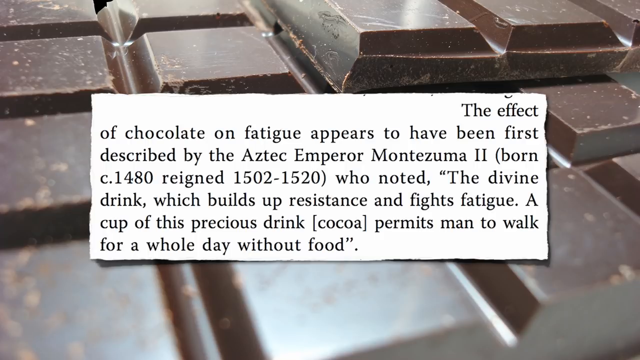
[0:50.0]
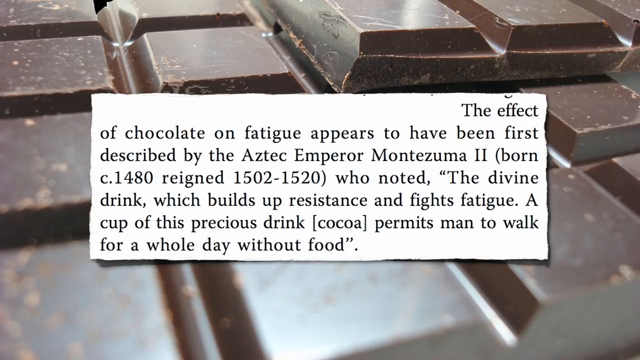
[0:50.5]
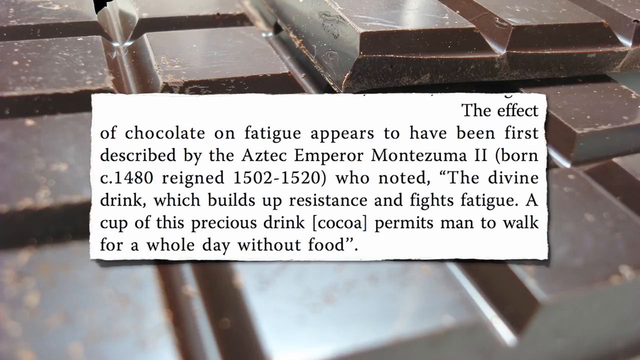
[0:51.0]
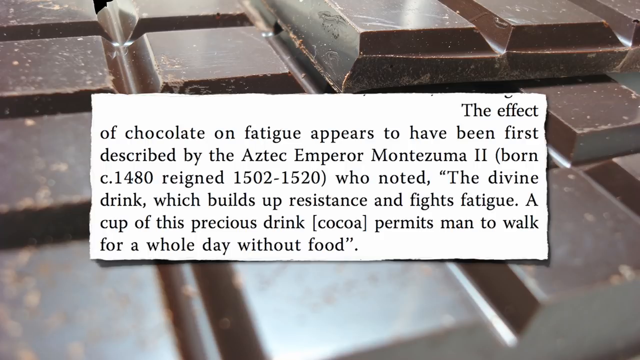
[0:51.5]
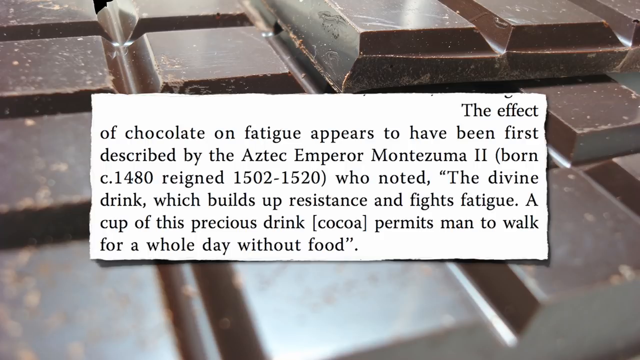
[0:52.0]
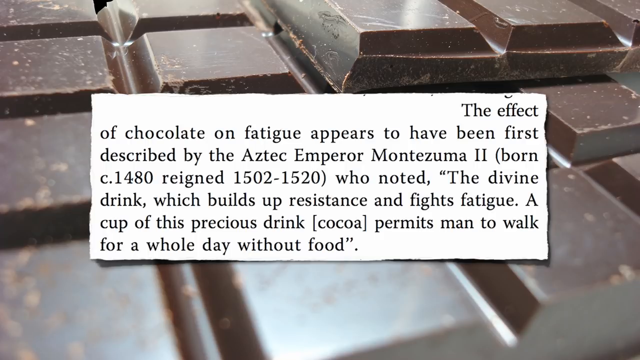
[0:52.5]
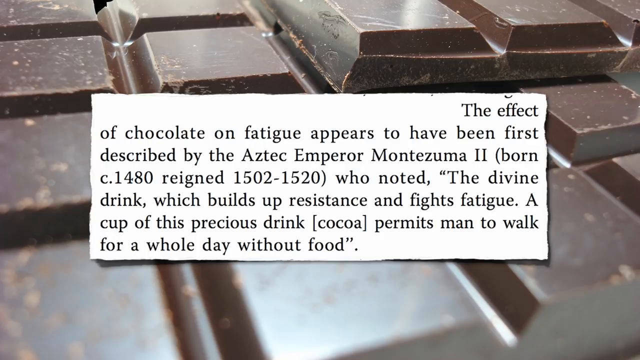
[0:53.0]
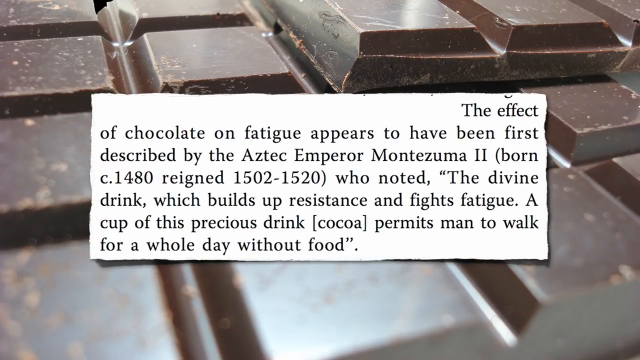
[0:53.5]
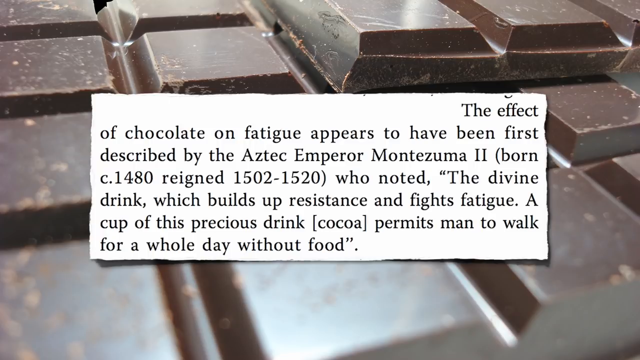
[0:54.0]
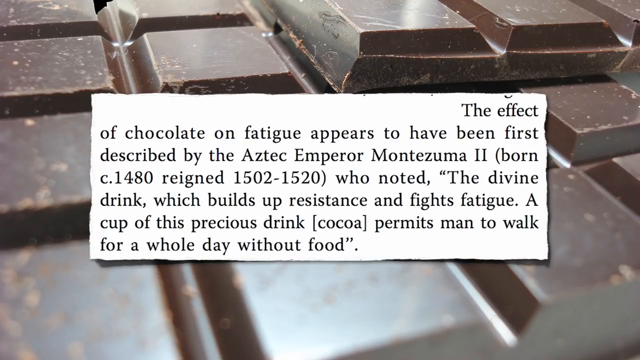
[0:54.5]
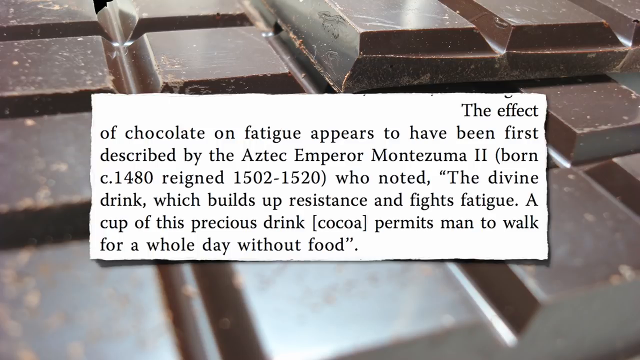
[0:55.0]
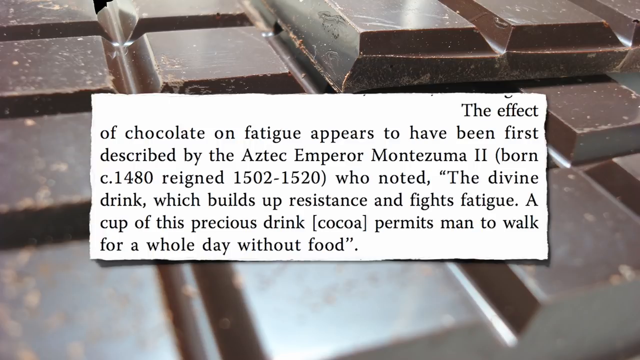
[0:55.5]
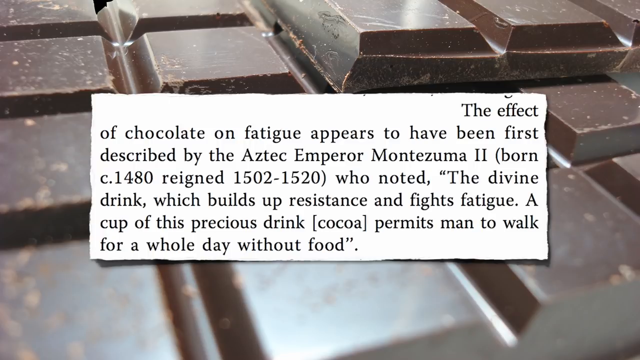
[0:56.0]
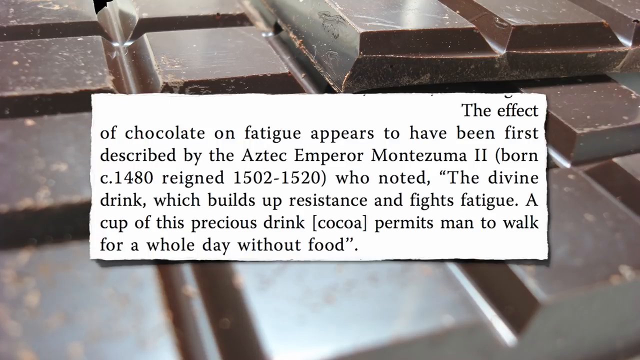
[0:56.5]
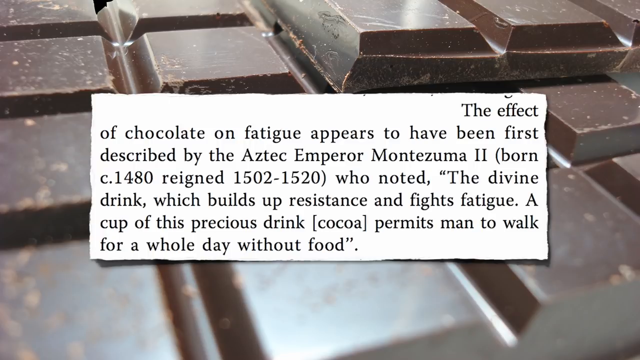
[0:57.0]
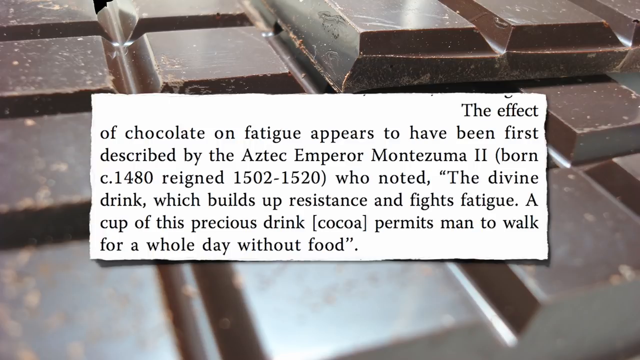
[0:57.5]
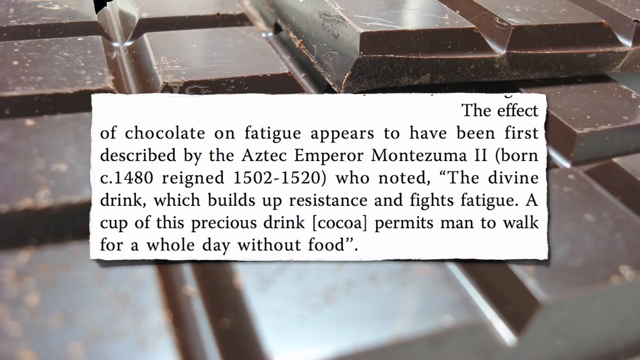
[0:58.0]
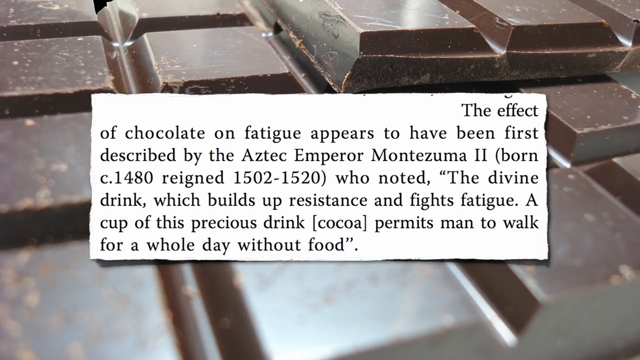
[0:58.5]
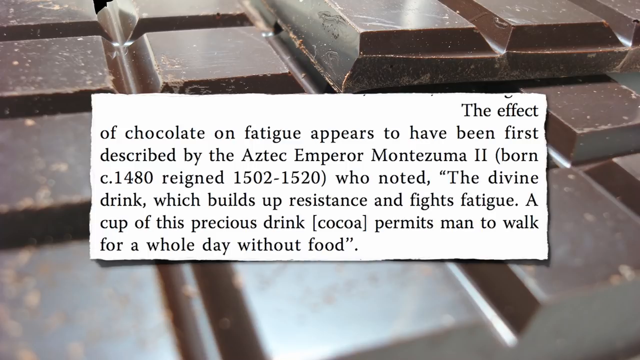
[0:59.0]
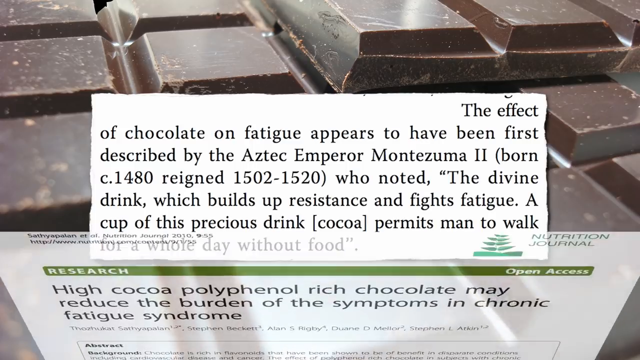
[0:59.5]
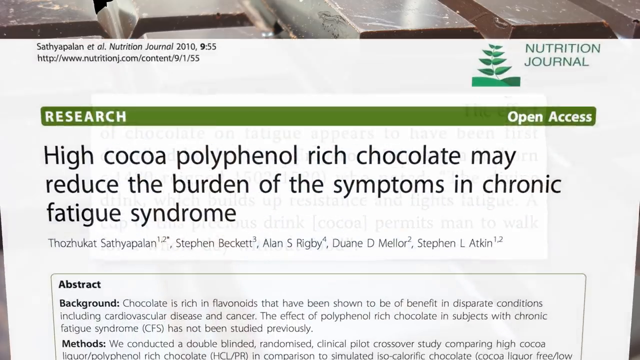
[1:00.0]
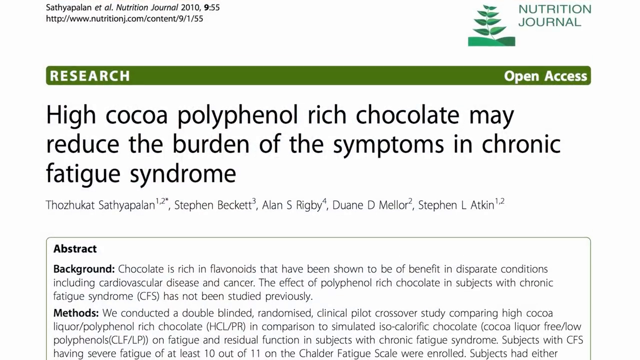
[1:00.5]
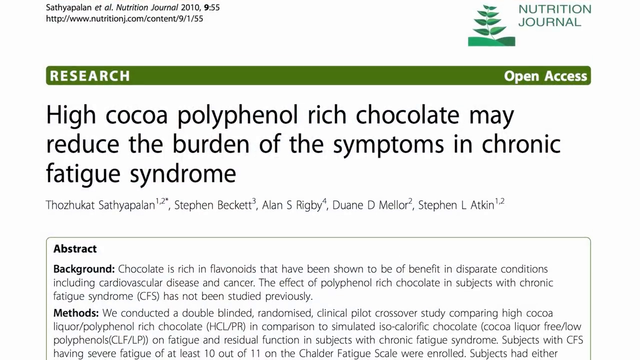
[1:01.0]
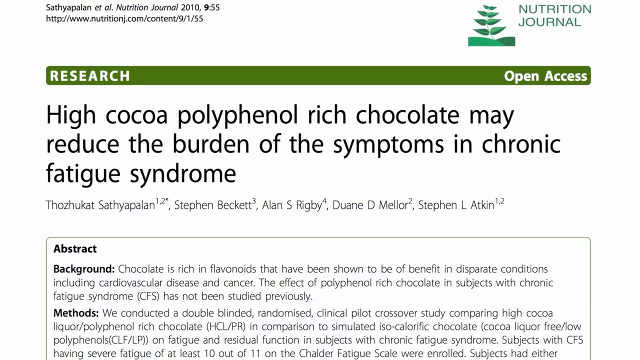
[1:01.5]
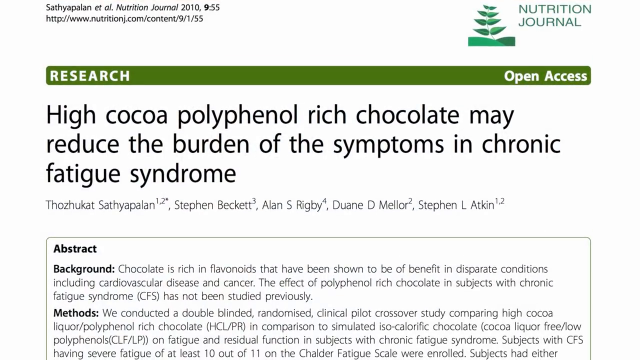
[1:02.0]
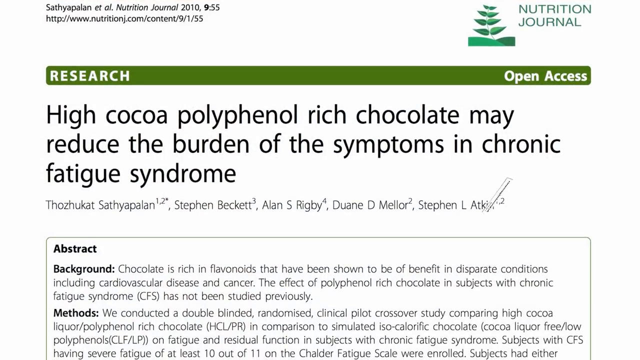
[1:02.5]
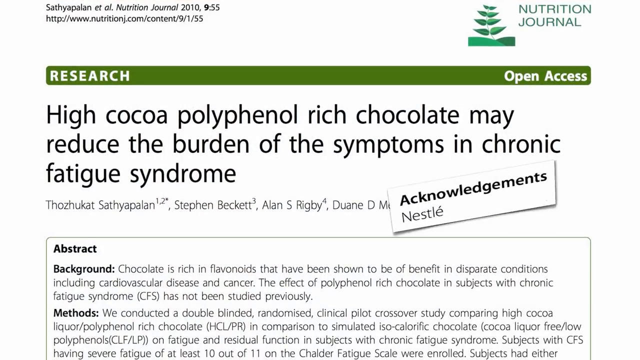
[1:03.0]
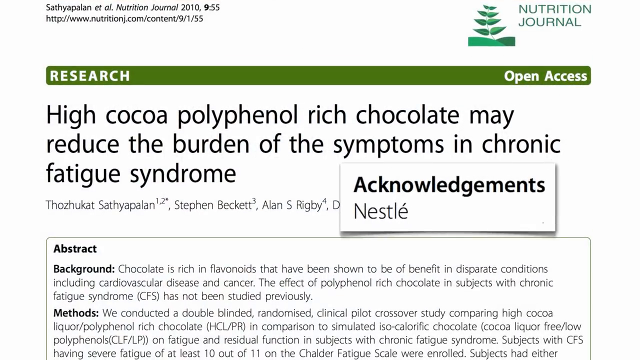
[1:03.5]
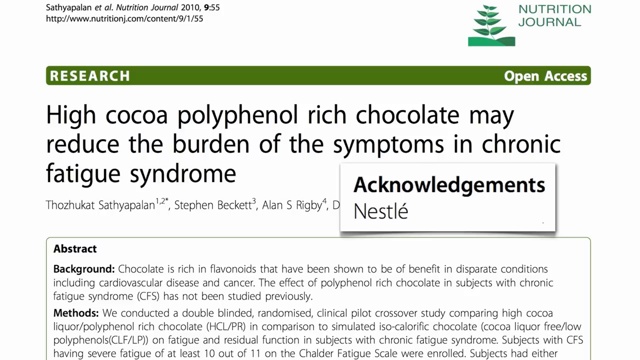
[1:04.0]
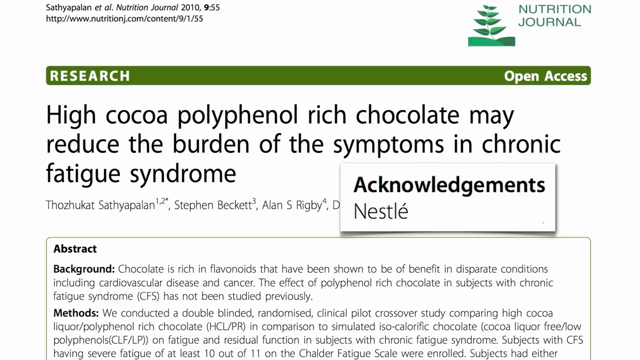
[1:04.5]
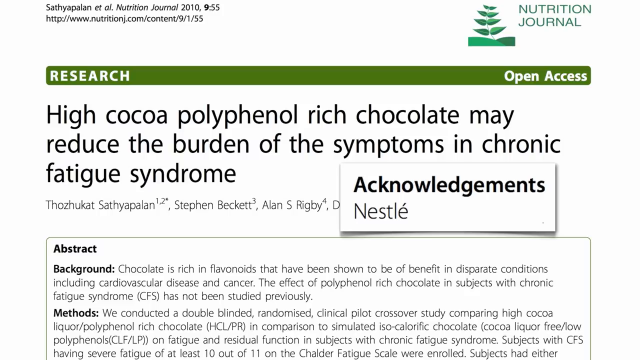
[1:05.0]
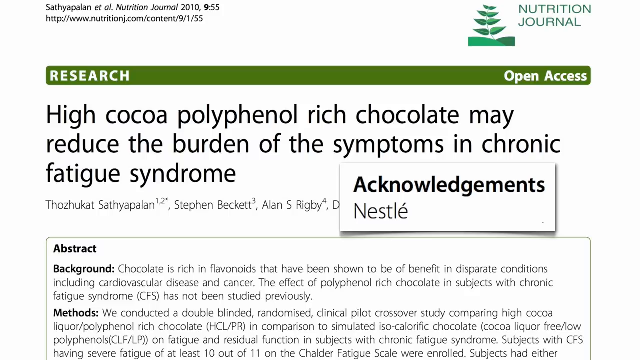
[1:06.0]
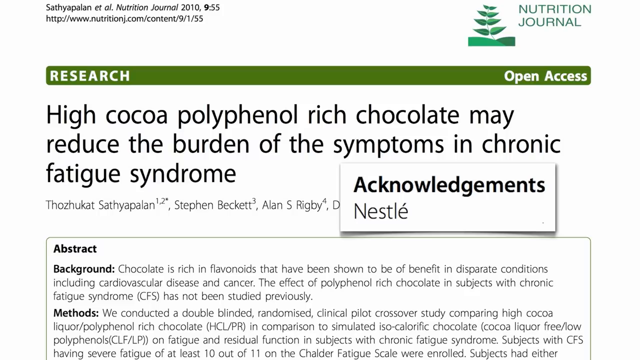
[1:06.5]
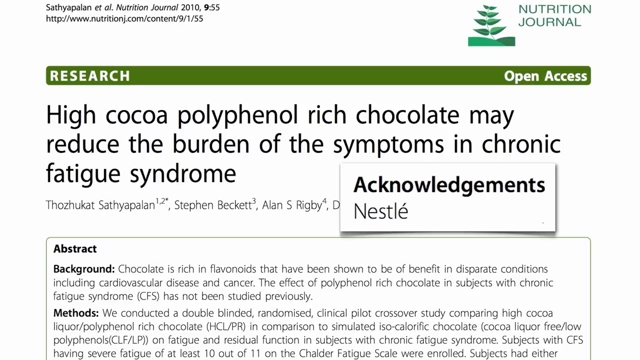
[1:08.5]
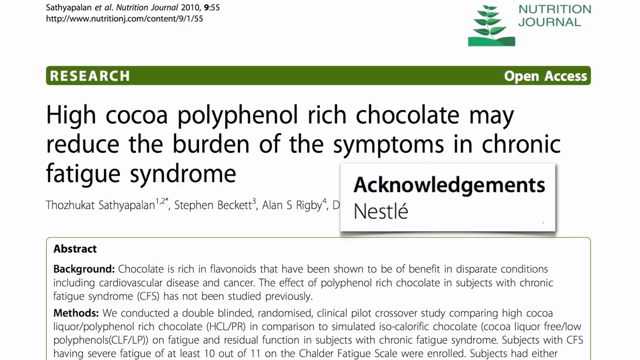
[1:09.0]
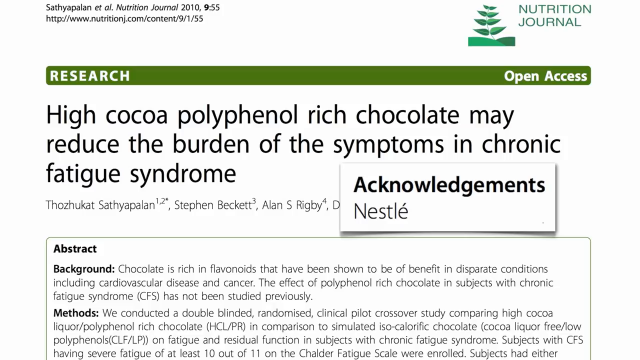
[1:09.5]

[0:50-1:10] On a background of brown chocolate bars, a newspaper article clipping is pasted at the center. Its single paragraph, in black on a white background, reads "the effect of chocolate on fatigue appears to have been first described by the aztec emperor montezuma ii who noted the divine drink which builds up resistance and fights fatigue a cup of this precious drink permits man to walk for a whole day". The next screen appears from the bottom: a research paper titled "high cocoa polyphenol rich chocolate may reduce the burden of the symptoms in chronic fatigue syndrome". It is from an open access journal, with the nutrition journal logo on the top left side. The title is in three lines in black, the authors' names are in small letters below it, and a green banner is above the title. The abstract is partly visible.